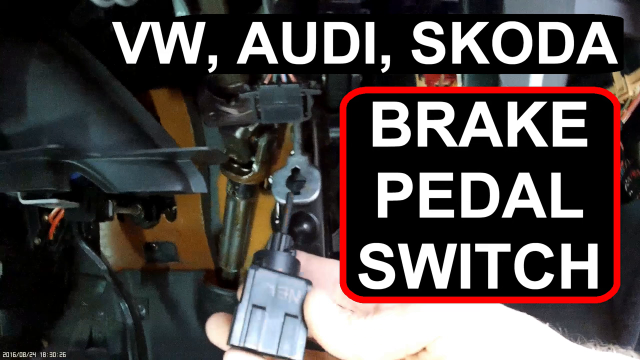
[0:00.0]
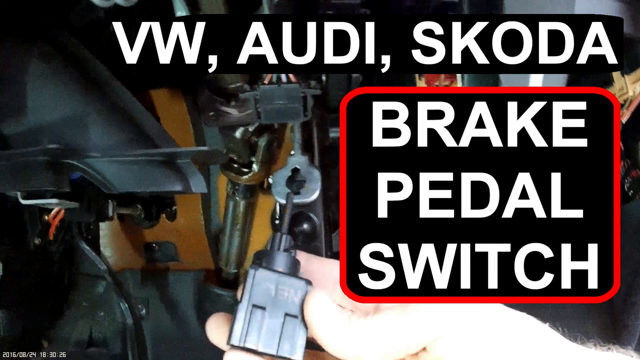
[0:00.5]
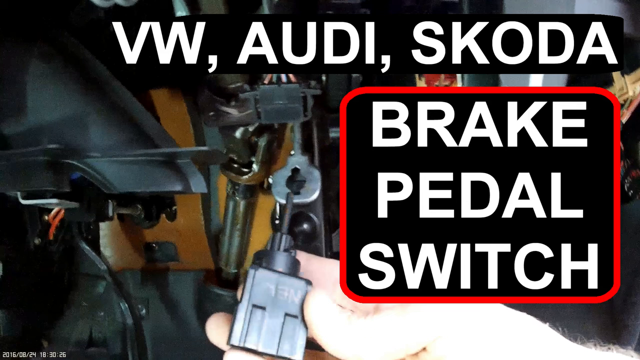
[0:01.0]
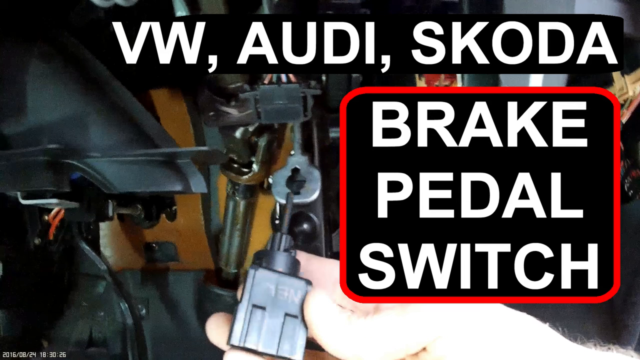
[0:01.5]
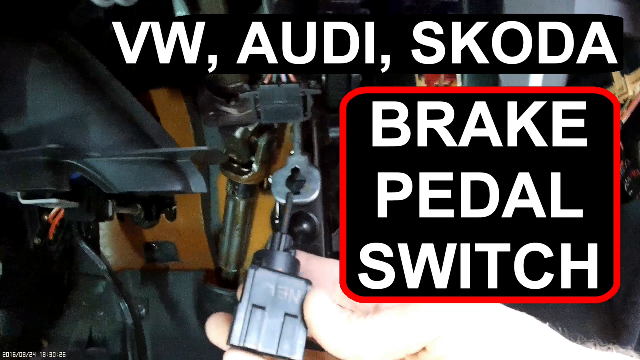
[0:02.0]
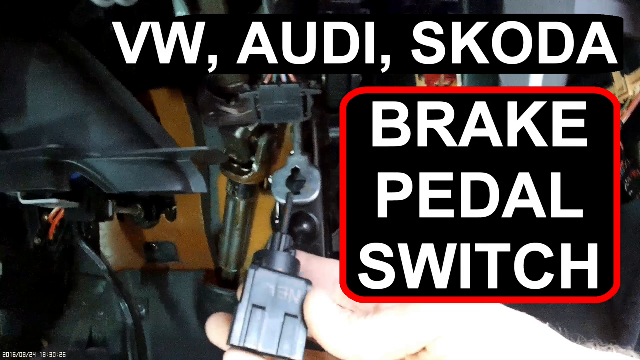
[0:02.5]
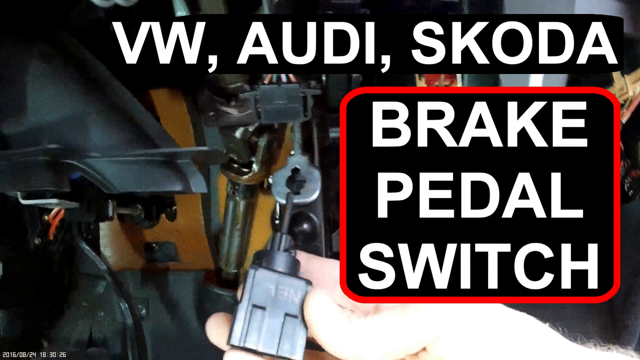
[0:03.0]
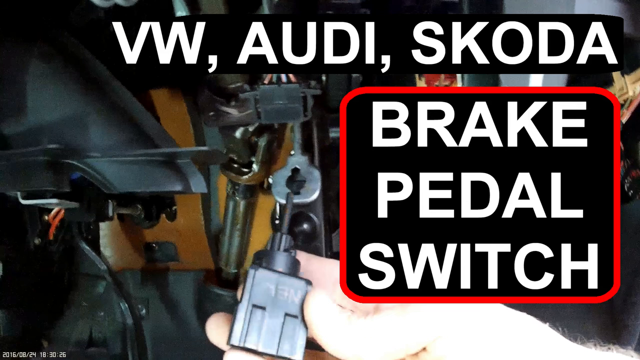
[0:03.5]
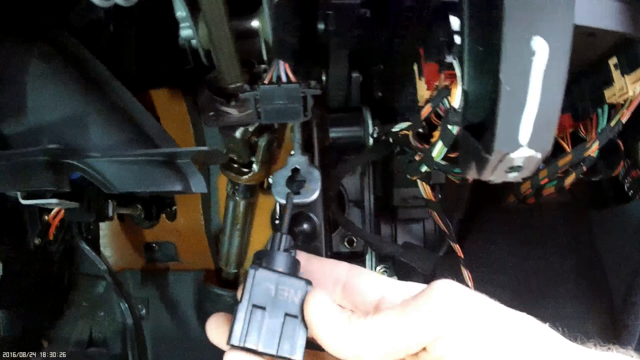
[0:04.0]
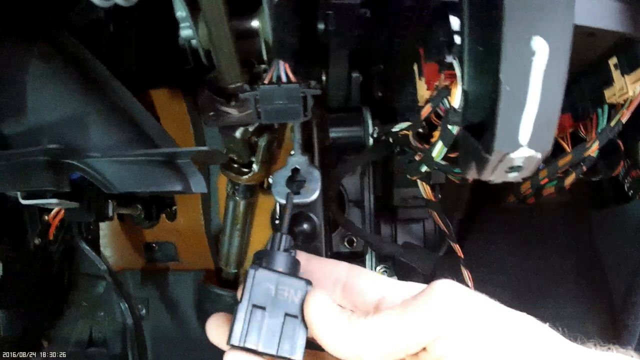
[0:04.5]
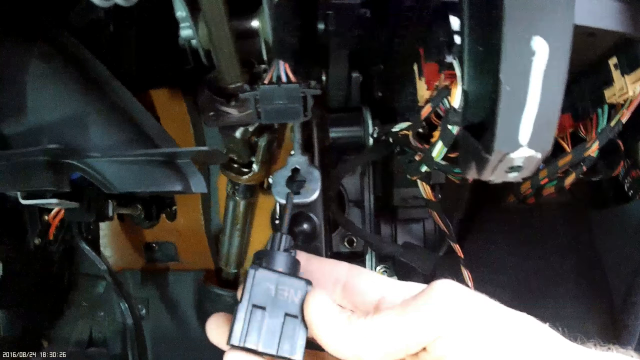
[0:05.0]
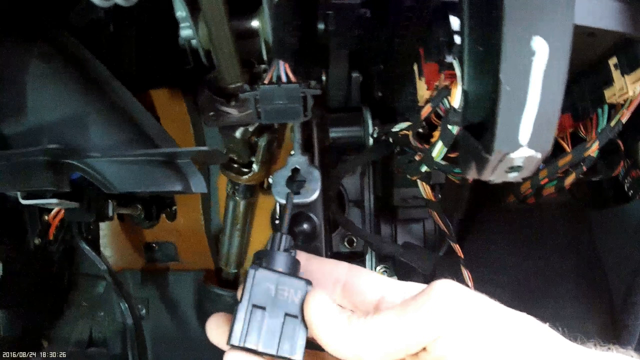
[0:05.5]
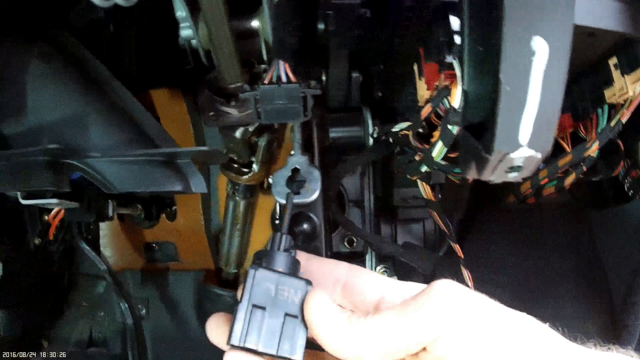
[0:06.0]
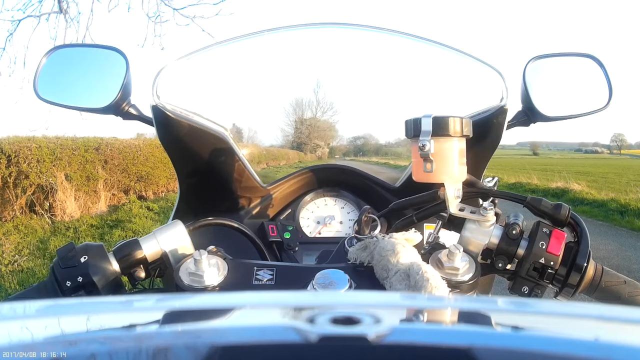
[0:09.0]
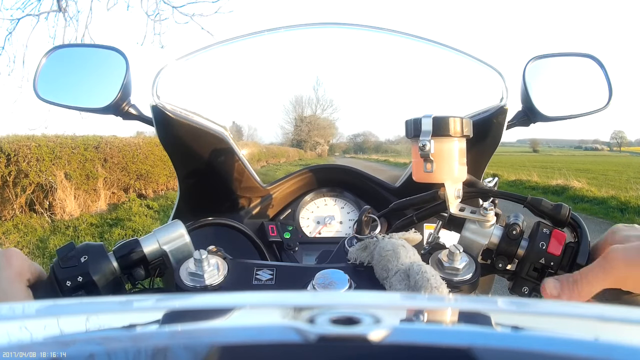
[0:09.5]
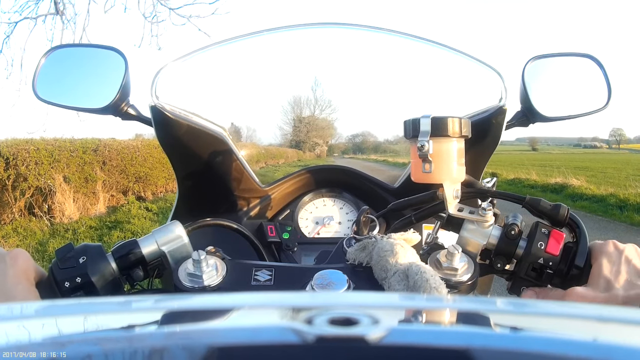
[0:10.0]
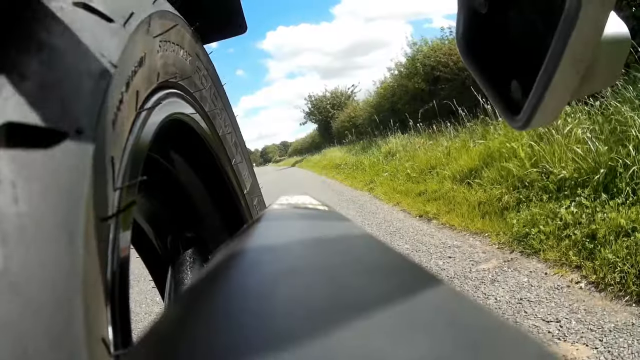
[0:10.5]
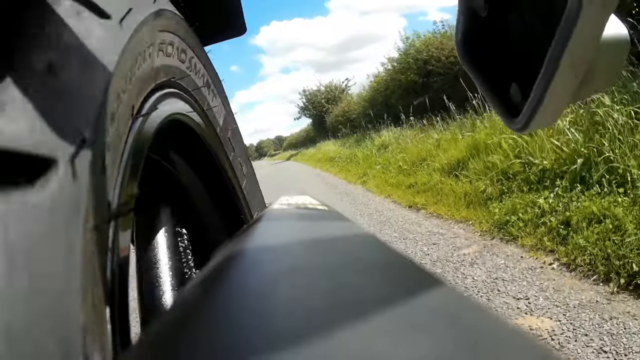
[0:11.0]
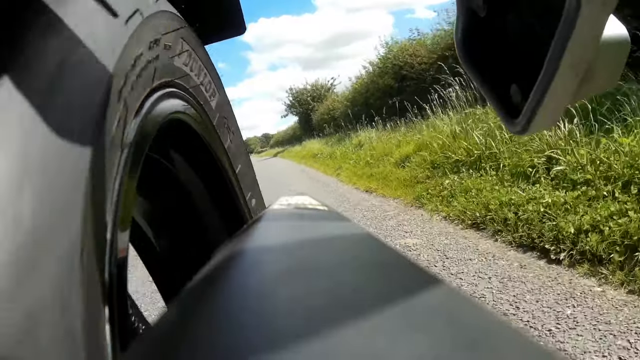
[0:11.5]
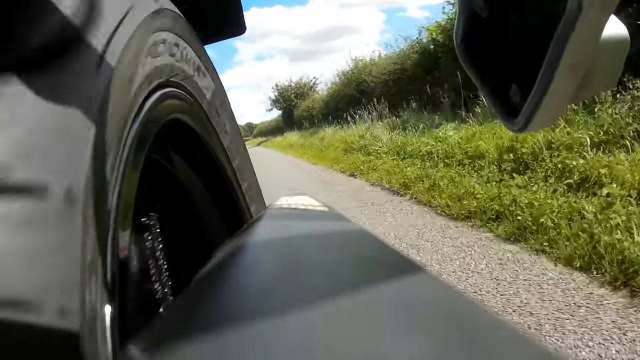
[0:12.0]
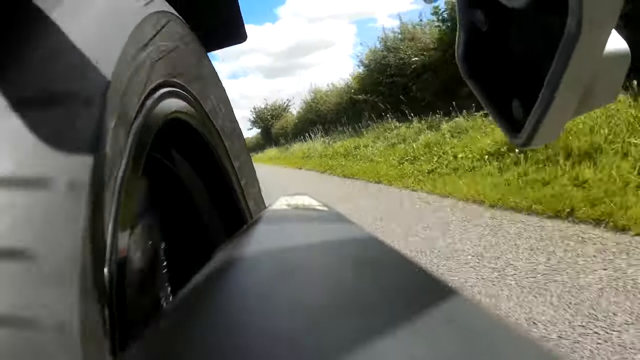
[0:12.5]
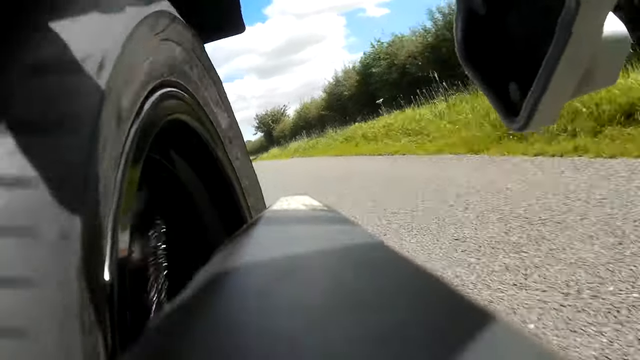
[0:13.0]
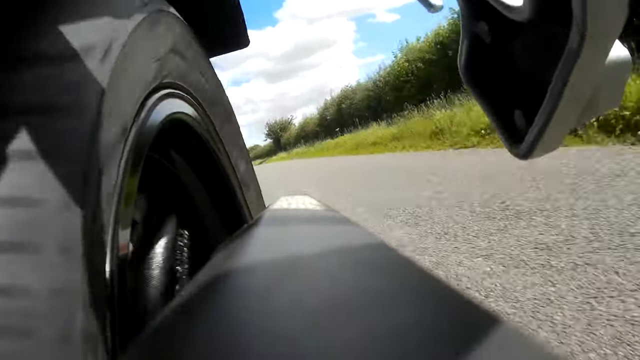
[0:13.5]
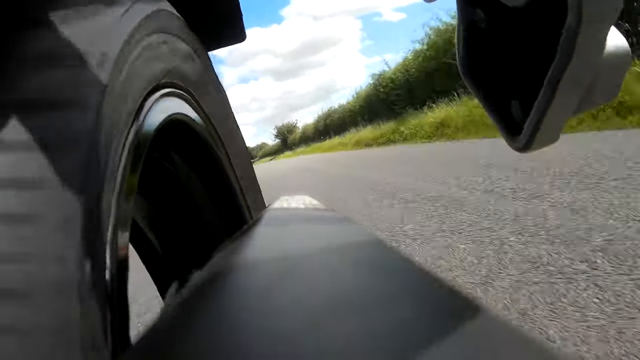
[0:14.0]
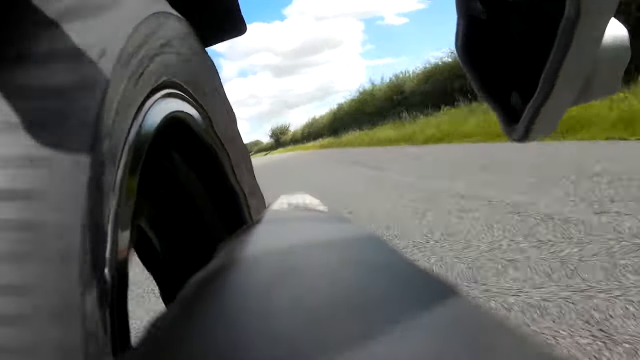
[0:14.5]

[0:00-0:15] Someone appears to be working on a brake pedal switch for a motorcycle. At the beginning, a white person holds the brake pedal switch, a small black piece that looks like it connects to a silver module piece underneath, or possibly where the transmission is. The video then cuts to him riding away on the motorcycle, showing the pavement underneath and green grass along the sides of the road. It is daytime, and the bike appears to be mainly black. The part is named as a VW Audi and Skoda brake pedal switch. He appears to be showing how to install the switch correctly.